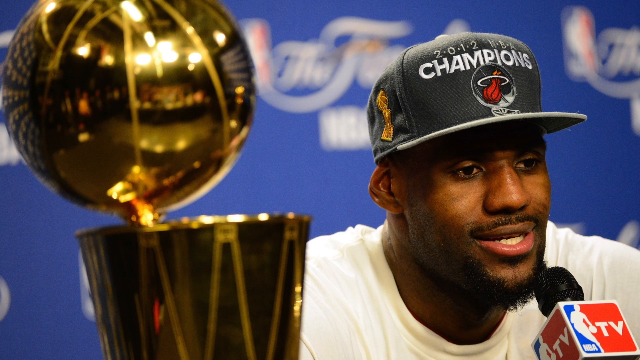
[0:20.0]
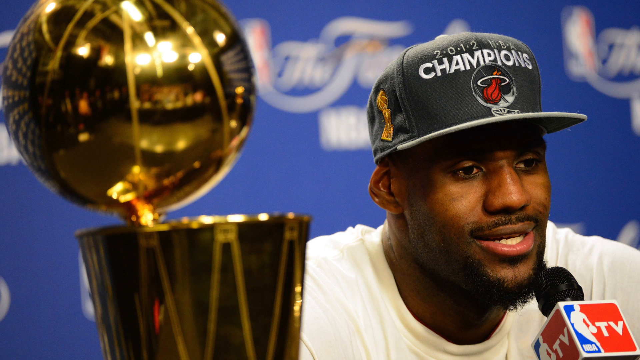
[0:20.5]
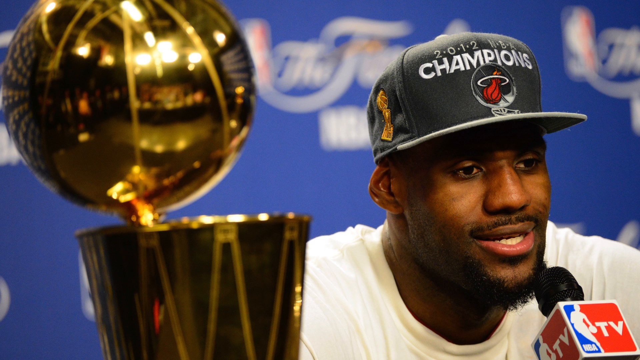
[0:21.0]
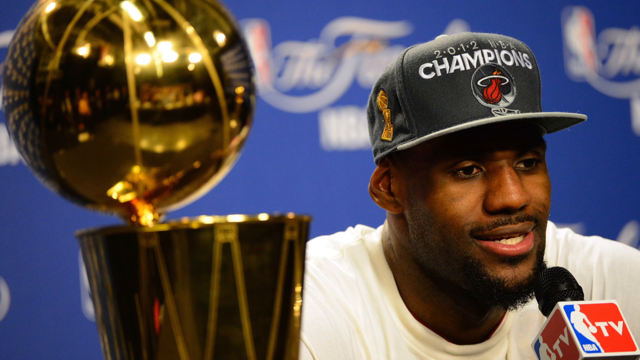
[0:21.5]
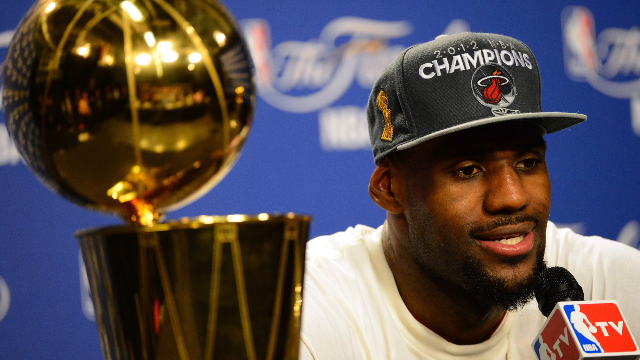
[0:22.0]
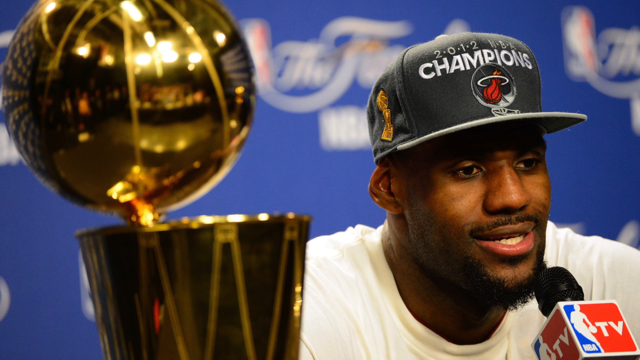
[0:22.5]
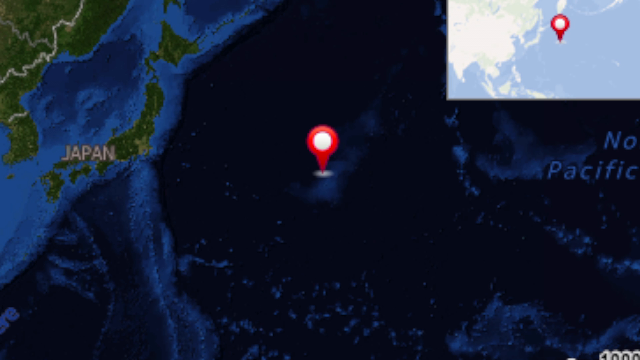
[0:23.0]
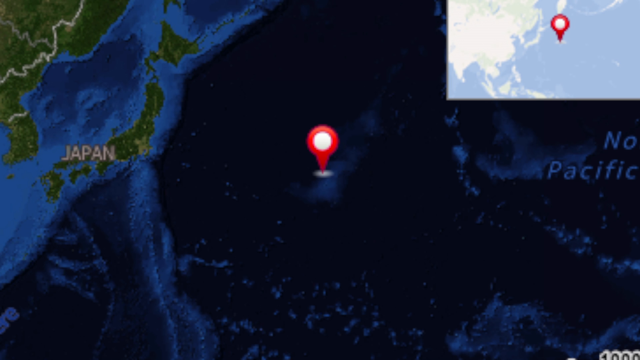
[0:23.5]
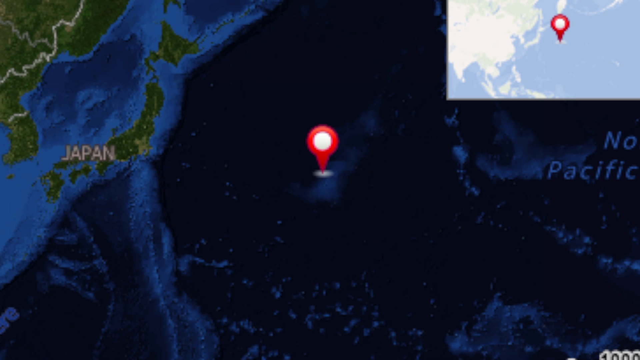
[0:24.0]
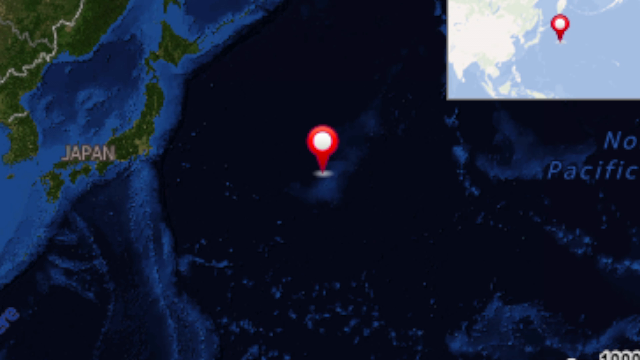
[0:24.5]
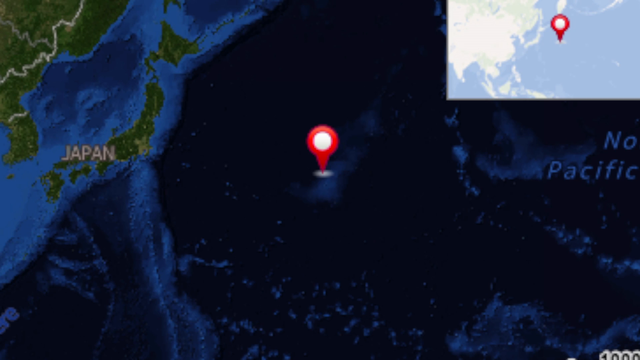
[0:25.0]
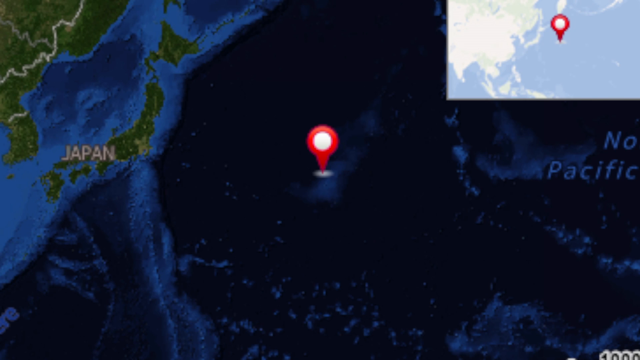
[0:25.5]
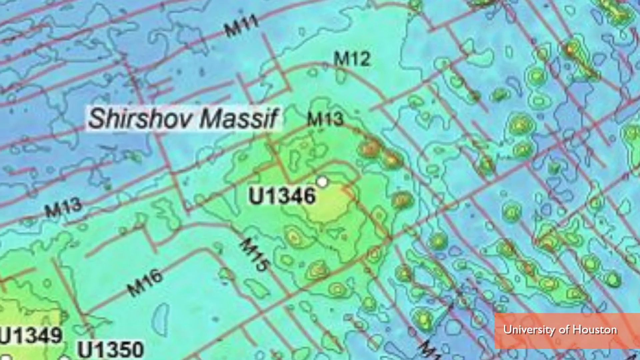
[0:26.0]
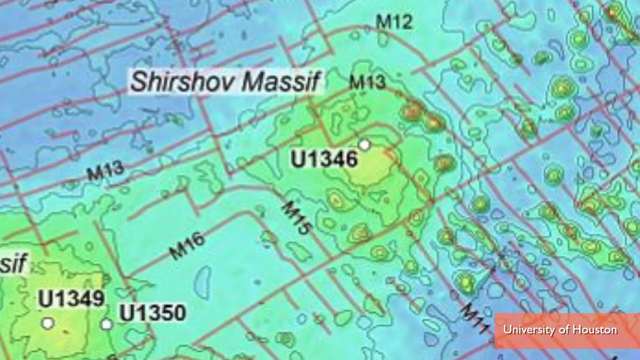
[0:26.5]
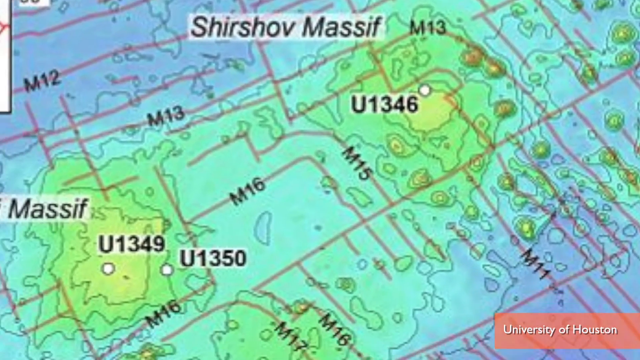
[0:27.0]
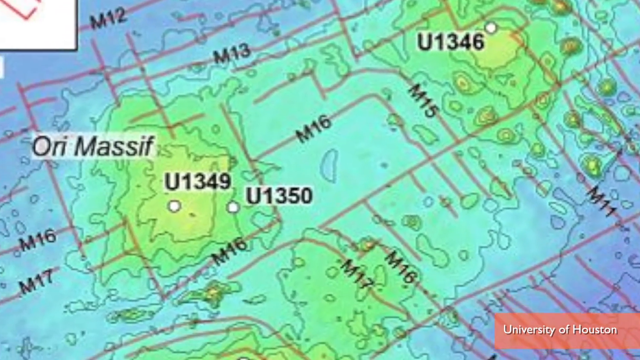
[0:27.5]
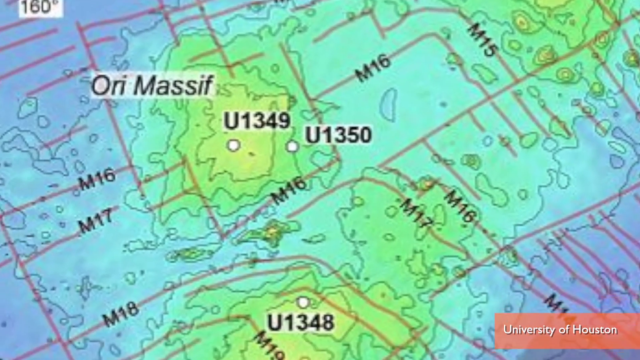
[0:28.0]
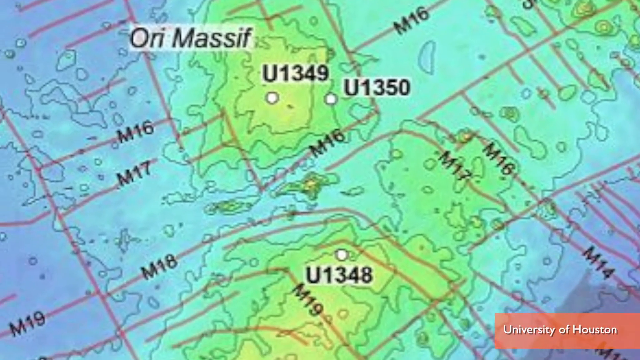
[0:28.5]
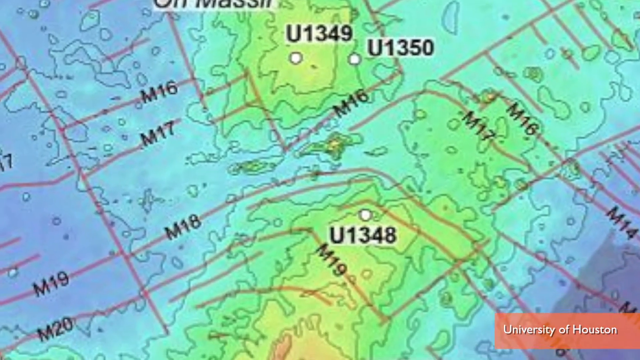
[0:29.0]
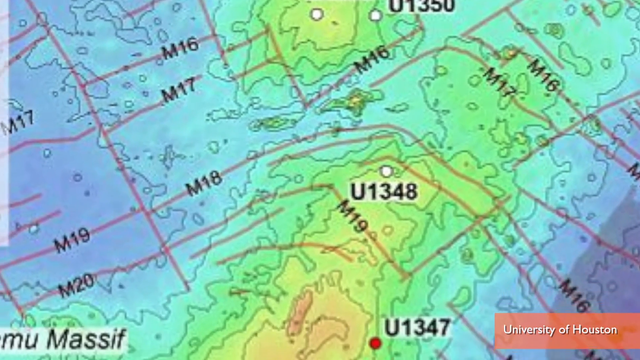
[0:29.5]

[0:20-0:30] A graphic shows LeBron James sitting with a trophy. The gold trophy is on the left, with a basketball on top that is also gold. He sits in front of a microphone, talking, seen from the chest up in a white t-shirt and a black baseball hat that says "2012 NBA champions" with a red Miami Heat logo. Behind him, "finals NBA" appears on an out-of-focus blue background. The view switches to a map graphic with a small red upside-down teardrop location marker in the middle of the ocean just off the coast of Japan, which is labeled in white capital letters. In the upper right is a lighter map with lighter blue colors and the same red and white location marker. The view then returns to the two-dimensional topographical map with small black labels and different colors, showing identifiers for different areas such as "M16" and "U1348". Red lines run along this map, which has the same greens, yellows and blues as the 3D map.